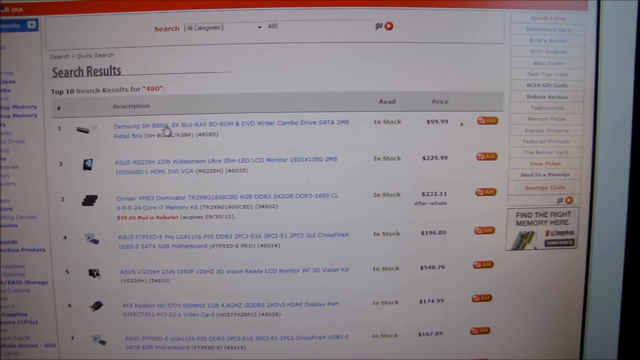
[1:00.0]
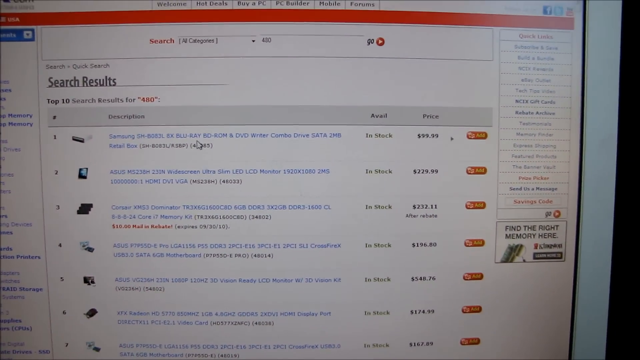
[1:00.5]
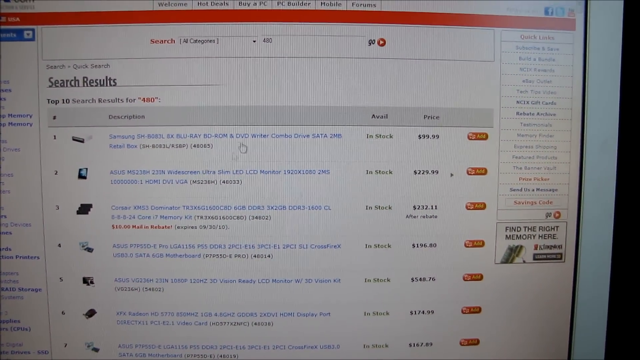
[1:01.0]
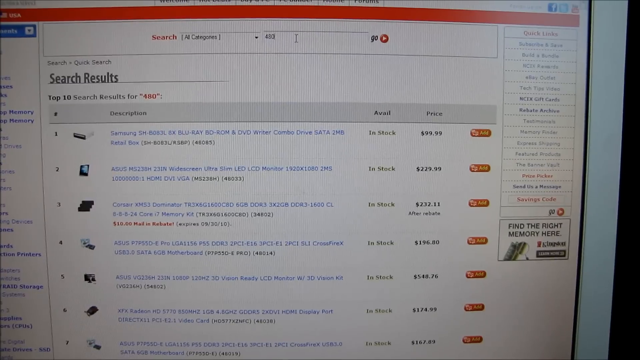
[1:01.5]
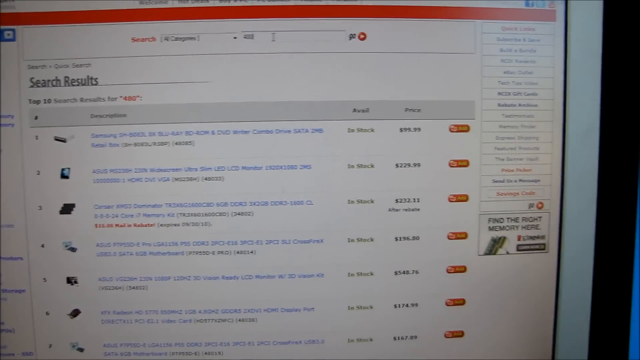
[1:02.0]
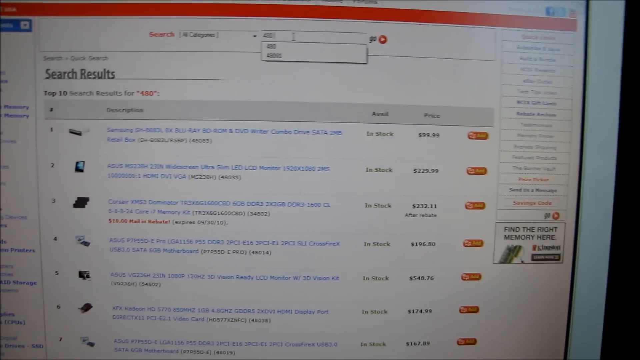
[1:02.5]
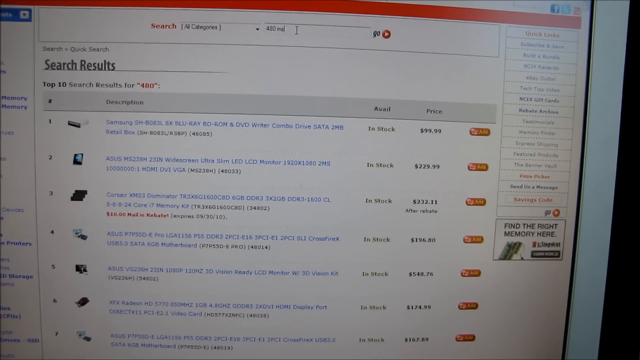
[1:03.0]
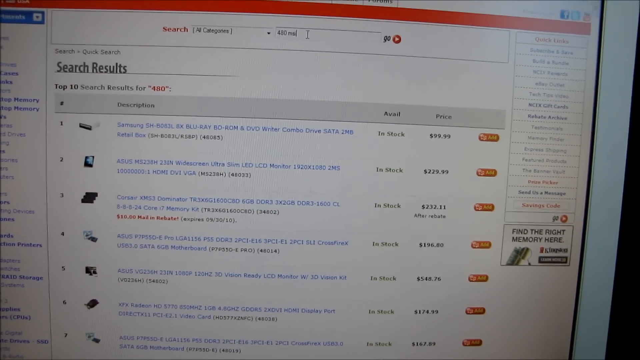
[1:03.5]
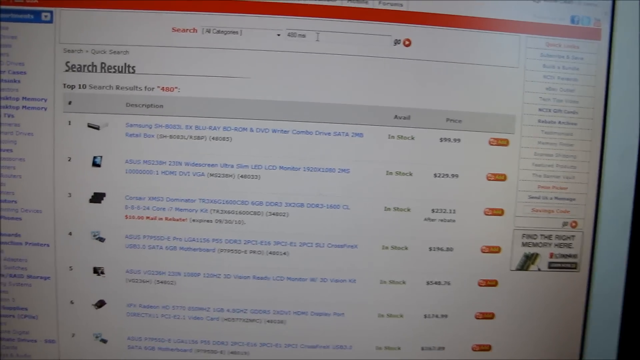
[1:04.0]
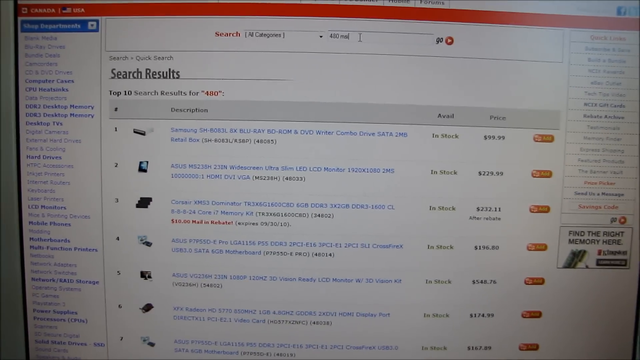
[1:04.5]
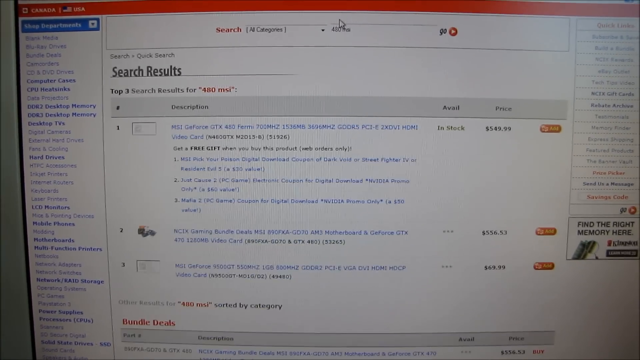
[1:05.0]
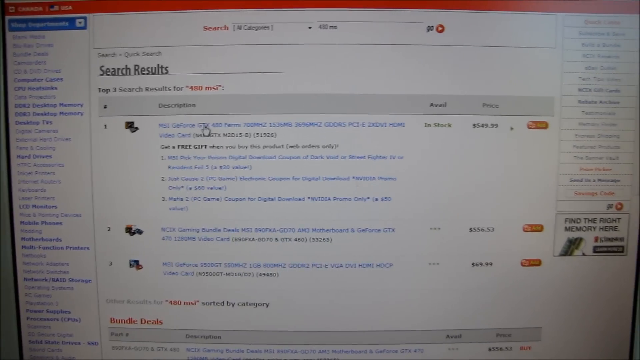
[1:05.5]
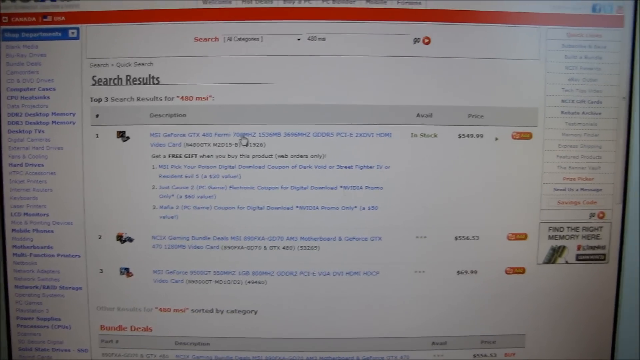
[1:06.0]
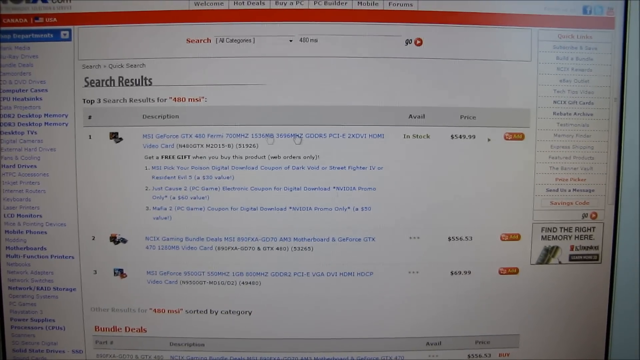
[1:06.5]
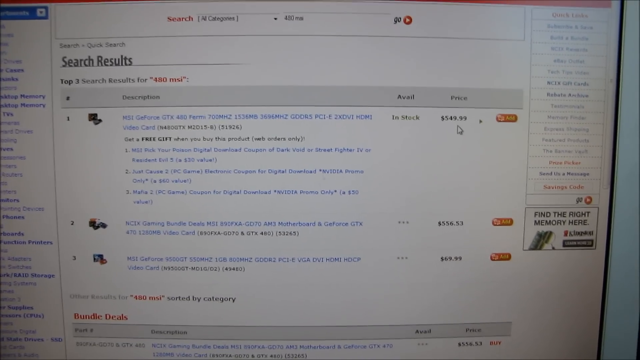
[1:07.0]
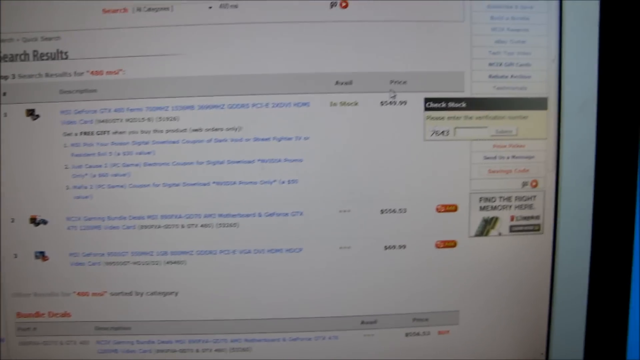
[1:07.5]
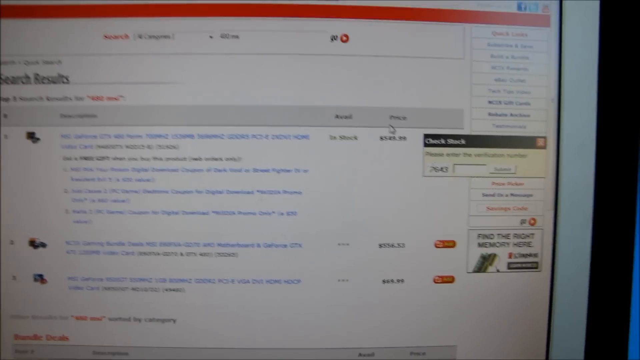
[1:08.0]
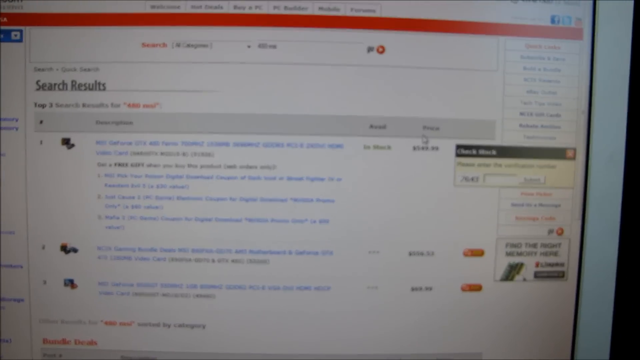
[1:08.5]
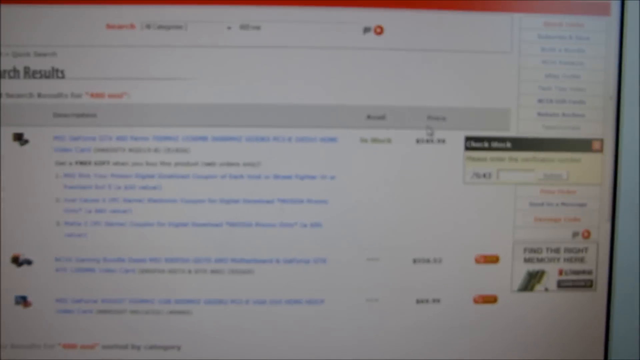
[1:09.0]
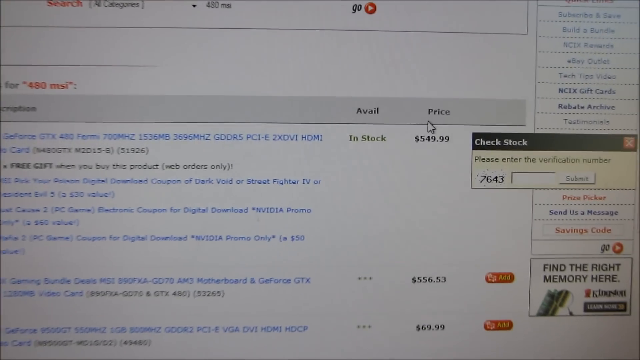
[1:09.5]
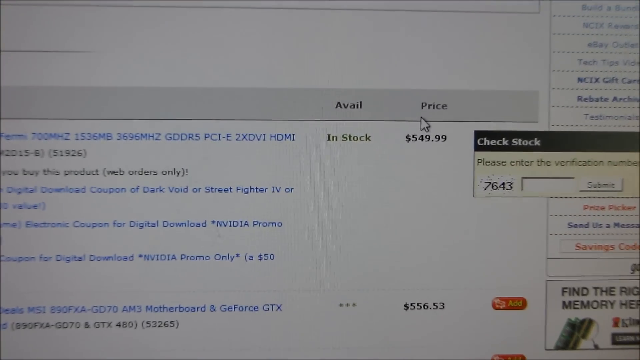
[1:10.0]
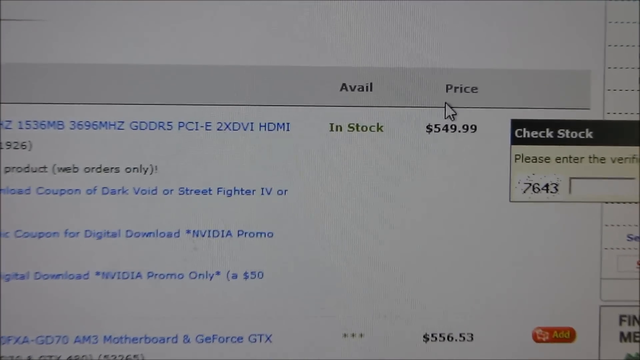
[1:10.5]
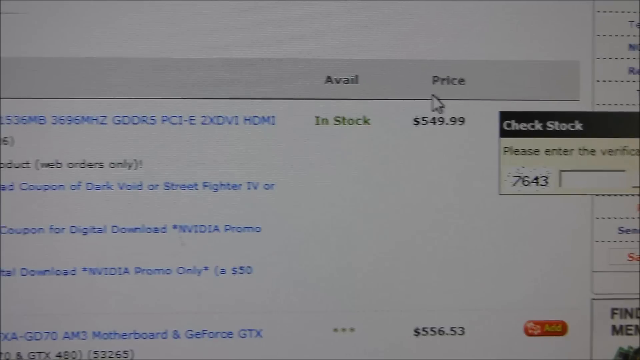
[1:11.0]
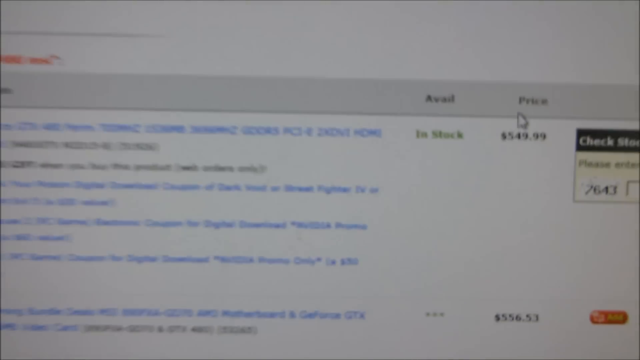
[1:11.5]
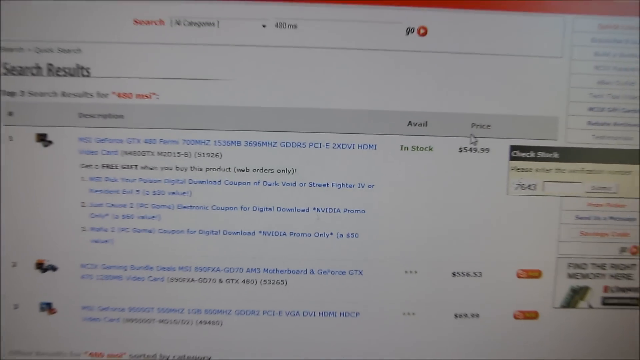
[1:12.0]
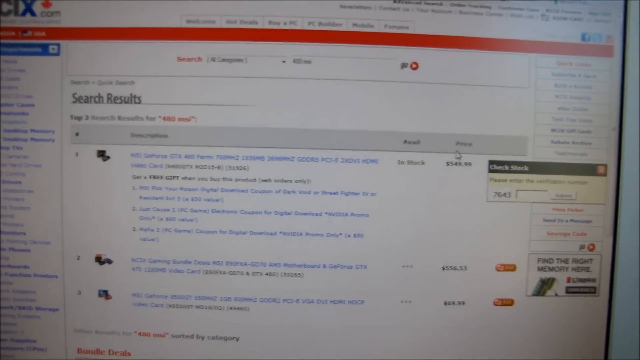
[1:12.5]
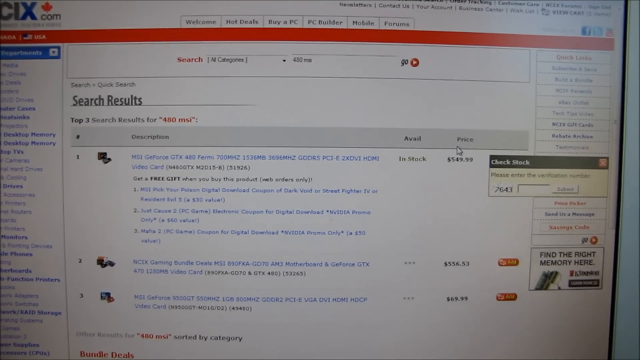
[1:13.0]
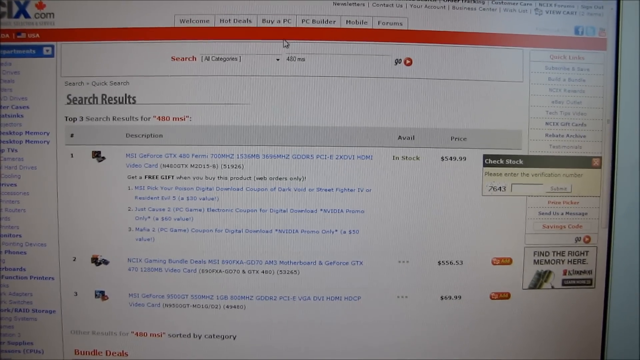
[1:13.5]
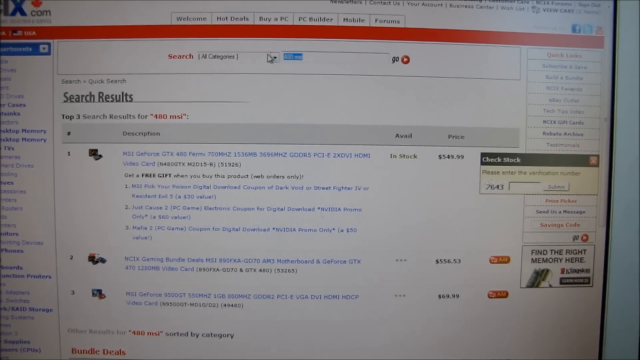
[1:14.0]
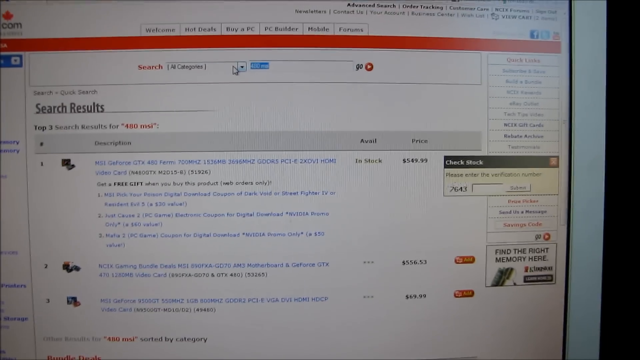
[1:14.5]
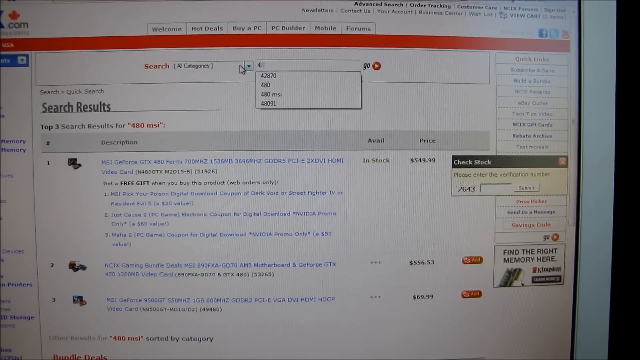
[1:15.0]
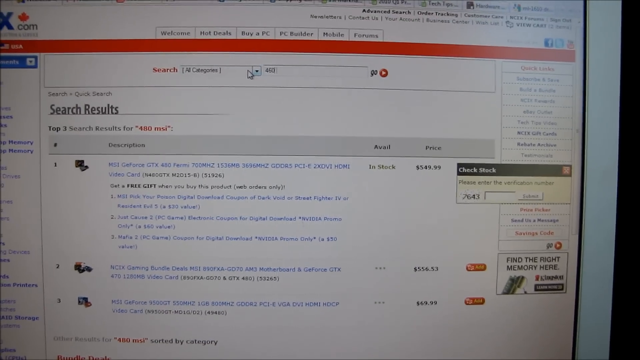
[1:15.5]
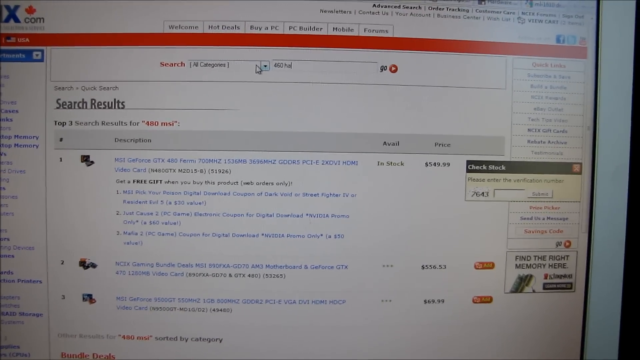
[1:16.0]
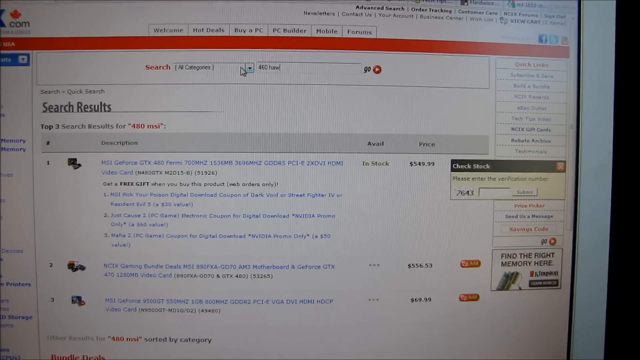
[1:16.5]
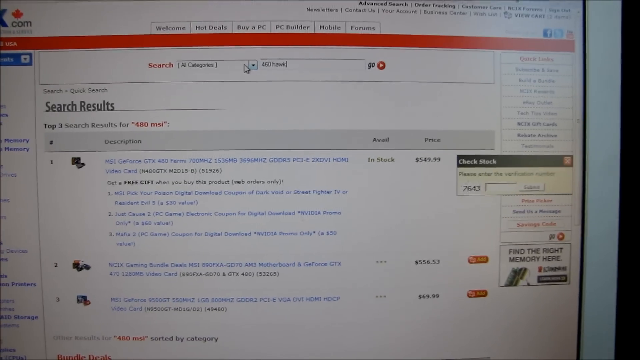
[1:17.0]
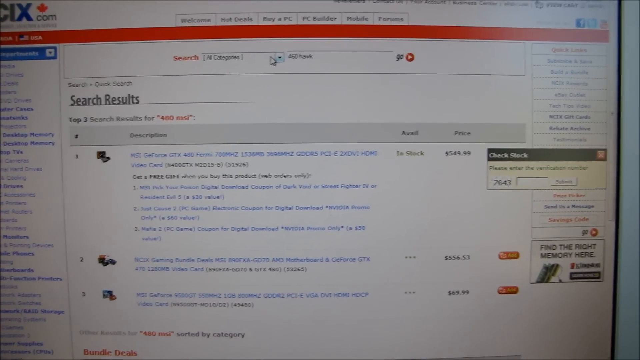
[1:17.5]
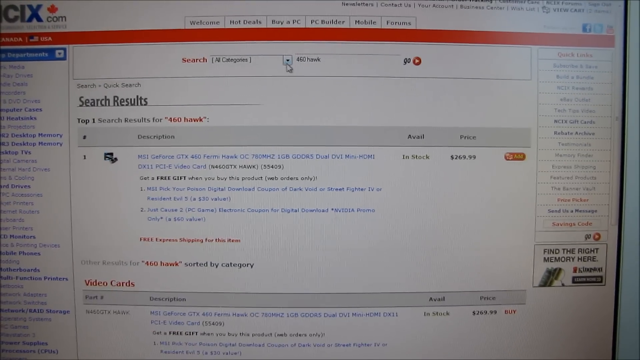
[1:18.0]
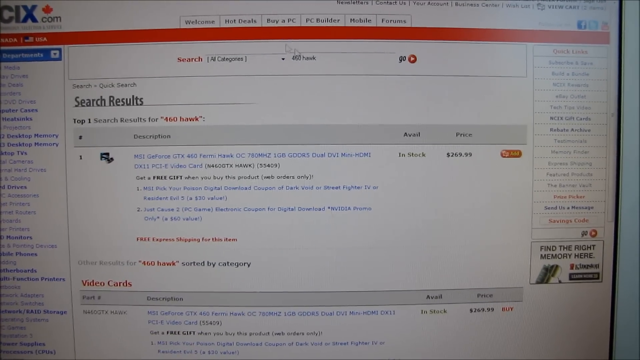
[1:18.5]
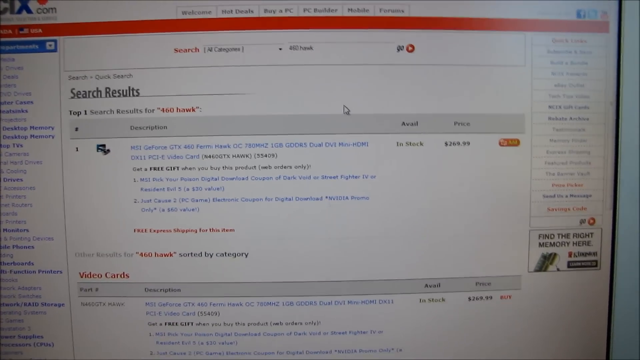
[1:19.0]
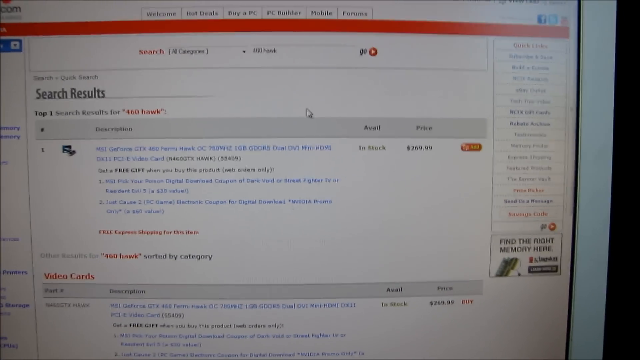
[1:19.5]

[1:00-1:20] Search results are shown on the computer, and someone clicks on different parts of the page to read more. They click on a price and the camera zooms in on it: it says "$549.99", with the mouse cursor pointed right at it and "in stock" next to it. The part itself is hard to identify. They move up the page and click "check stock", where it says "please enter a number", then go up to the top, click search, and enter something in the search bar before the shot cuts off.